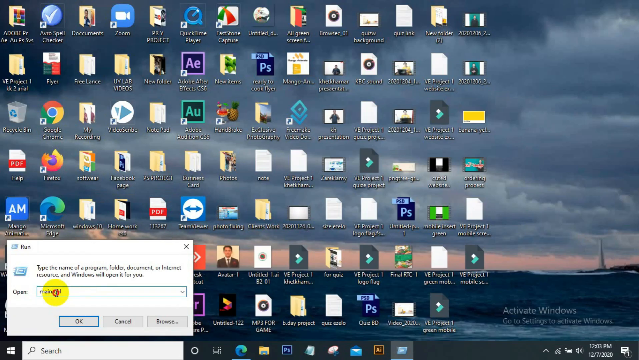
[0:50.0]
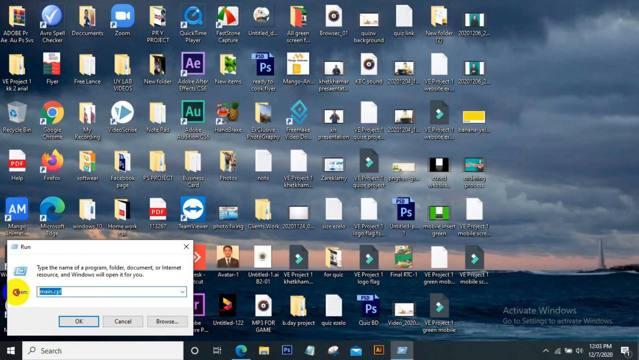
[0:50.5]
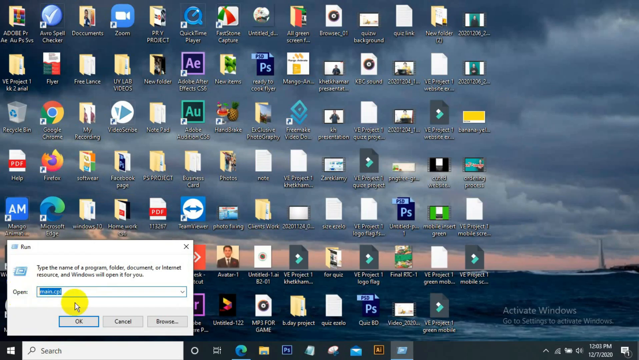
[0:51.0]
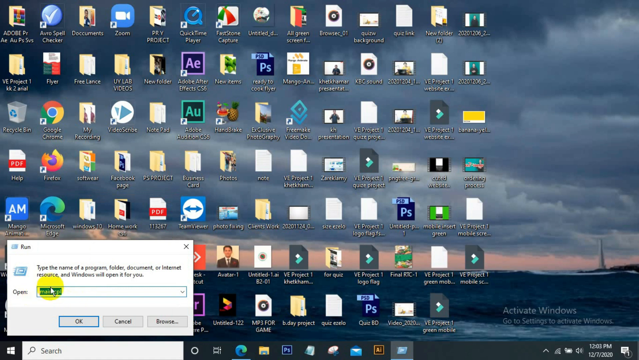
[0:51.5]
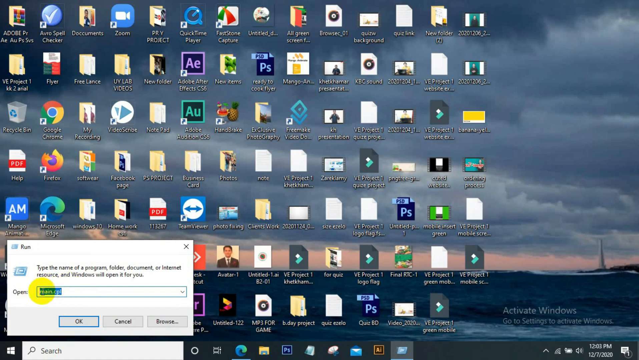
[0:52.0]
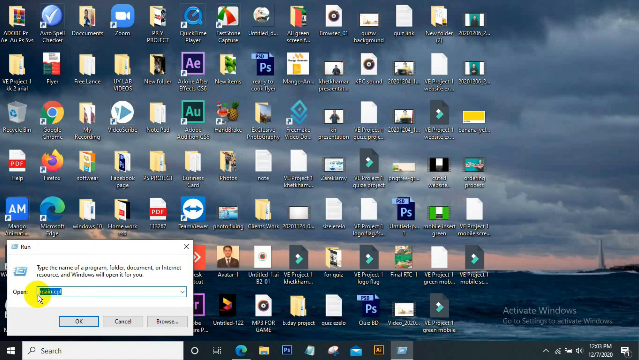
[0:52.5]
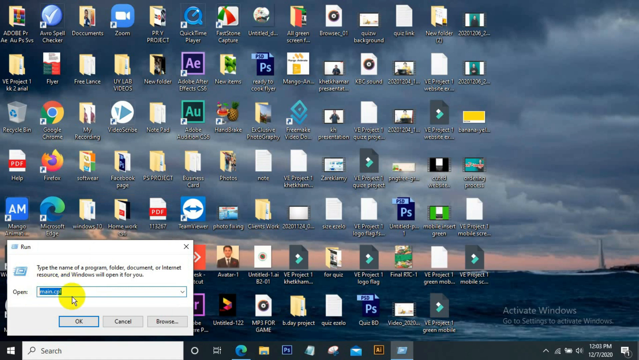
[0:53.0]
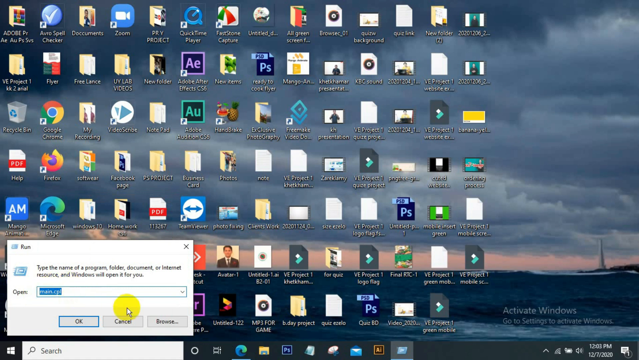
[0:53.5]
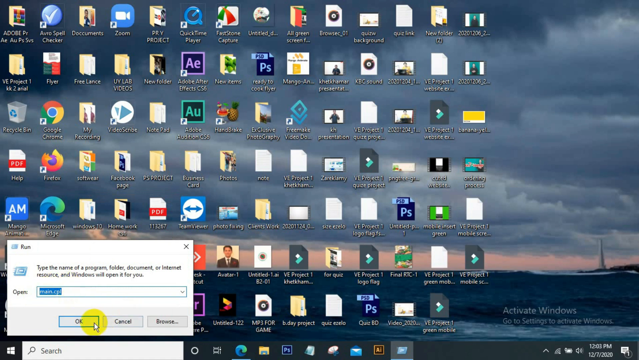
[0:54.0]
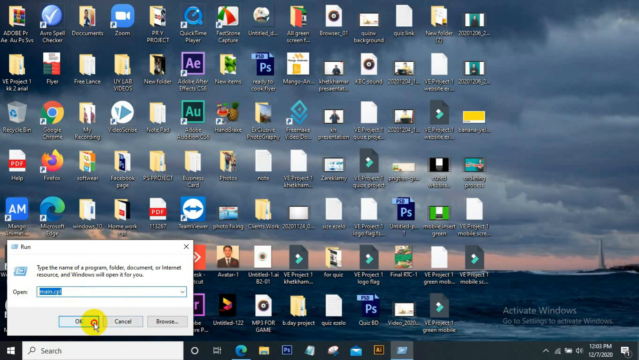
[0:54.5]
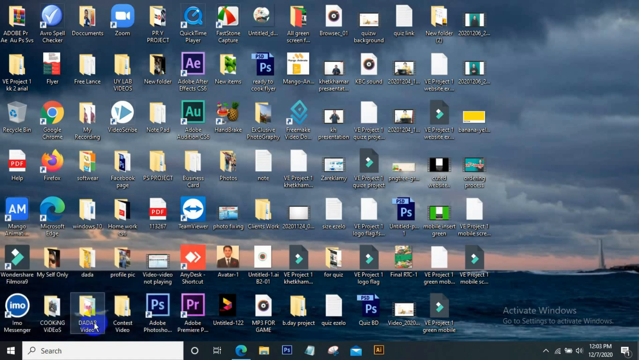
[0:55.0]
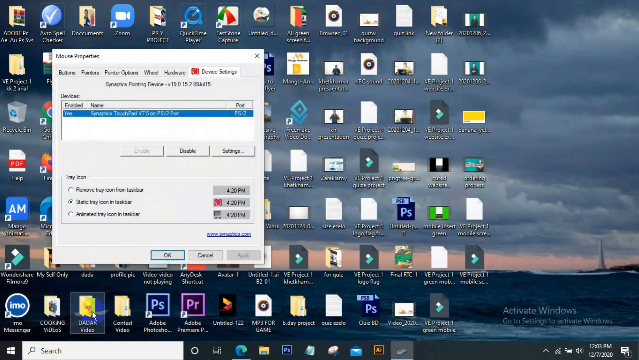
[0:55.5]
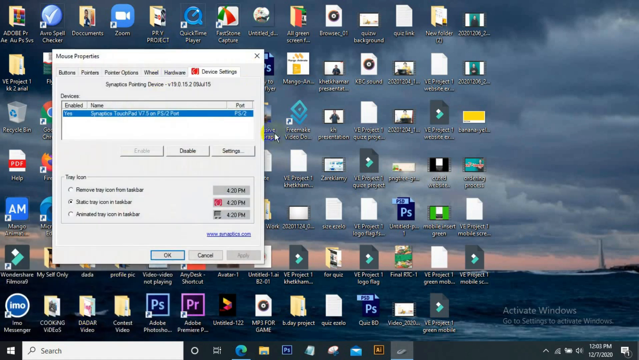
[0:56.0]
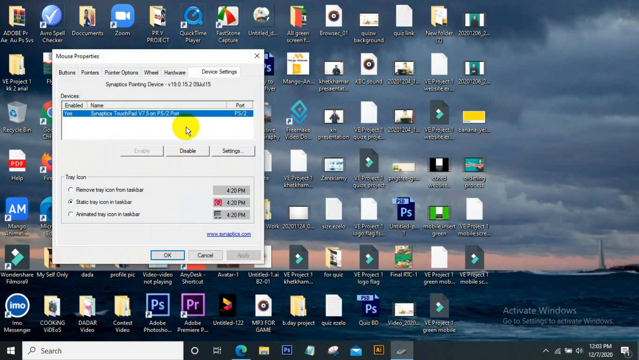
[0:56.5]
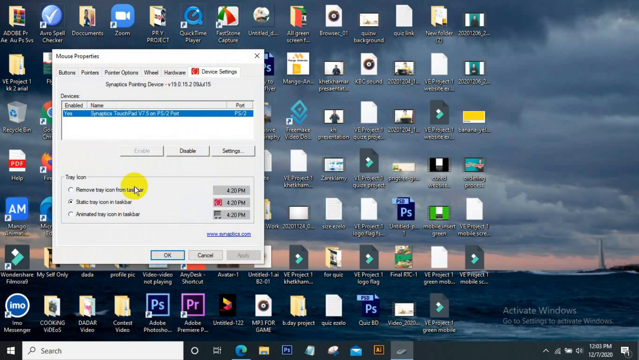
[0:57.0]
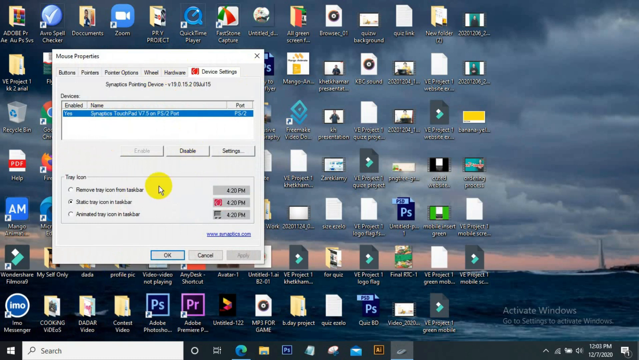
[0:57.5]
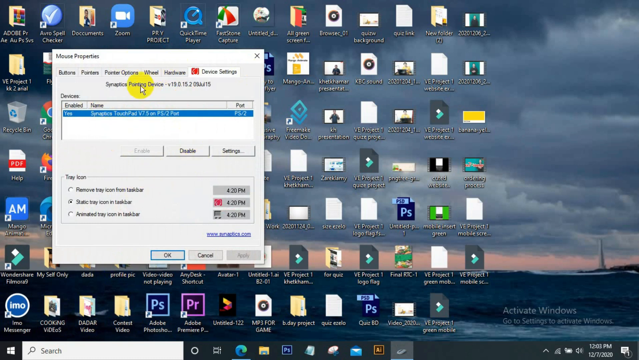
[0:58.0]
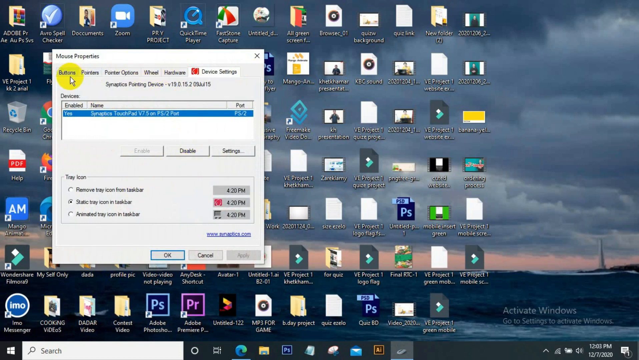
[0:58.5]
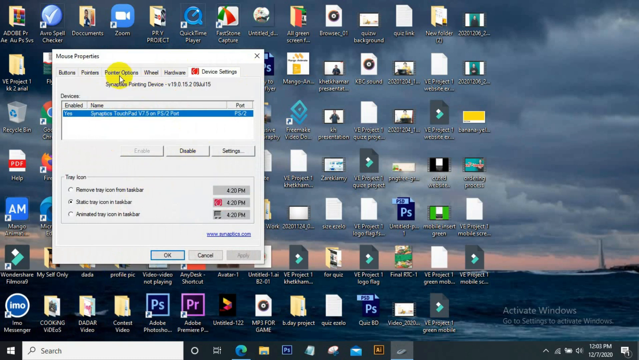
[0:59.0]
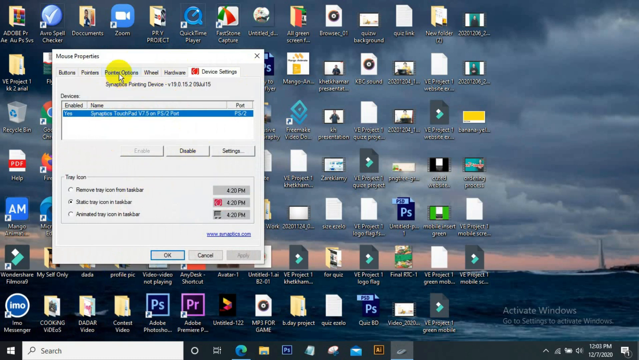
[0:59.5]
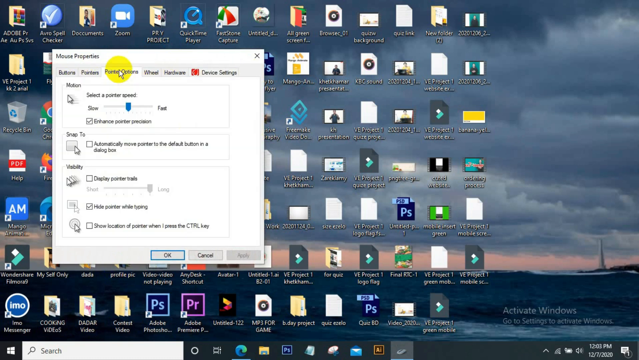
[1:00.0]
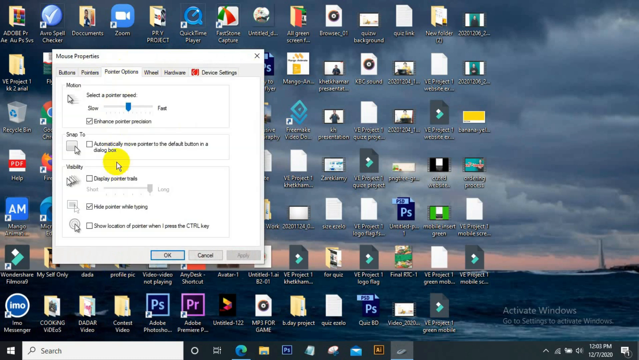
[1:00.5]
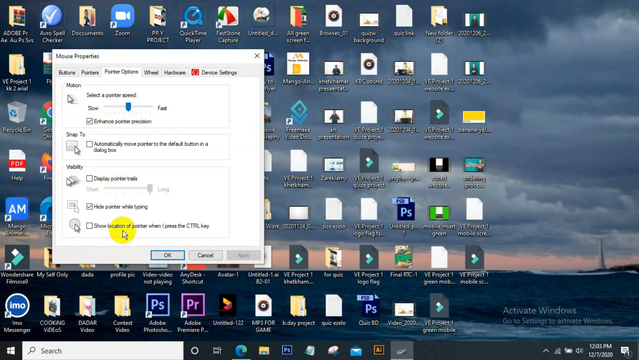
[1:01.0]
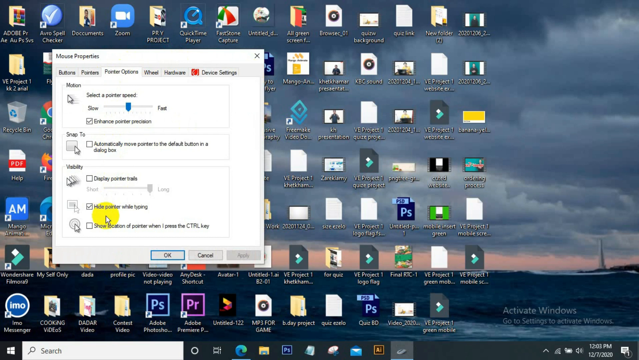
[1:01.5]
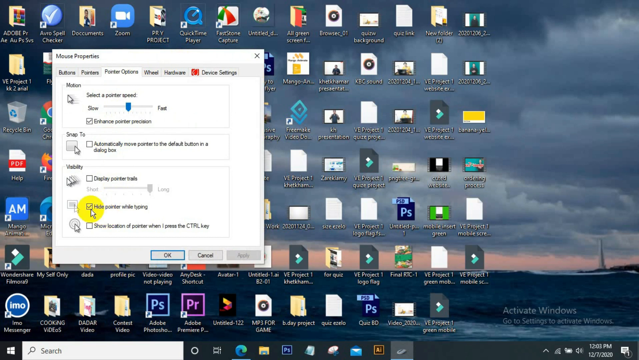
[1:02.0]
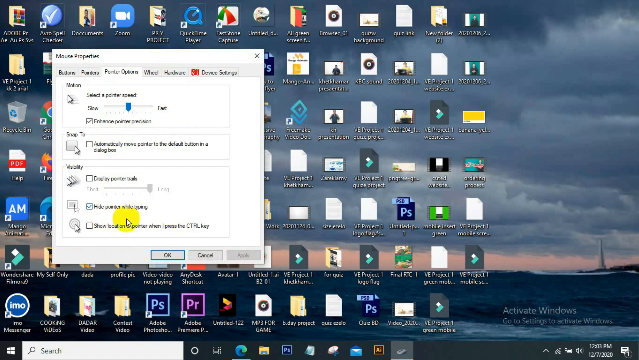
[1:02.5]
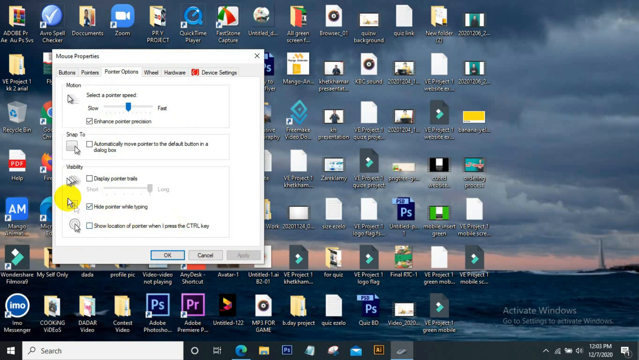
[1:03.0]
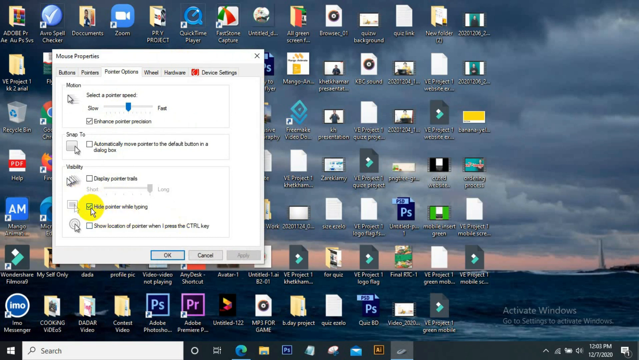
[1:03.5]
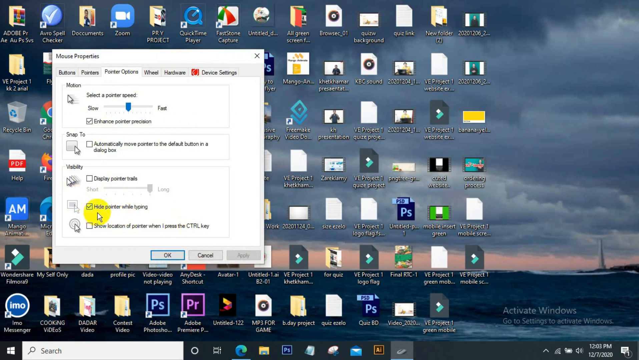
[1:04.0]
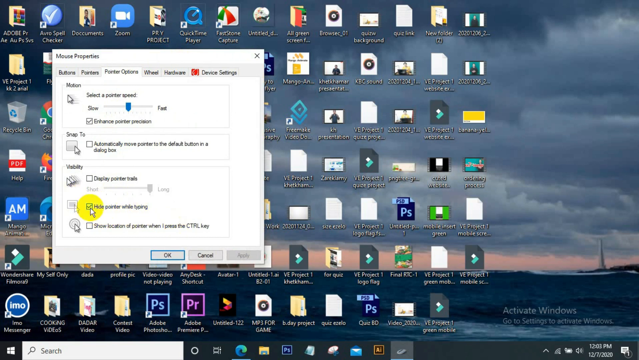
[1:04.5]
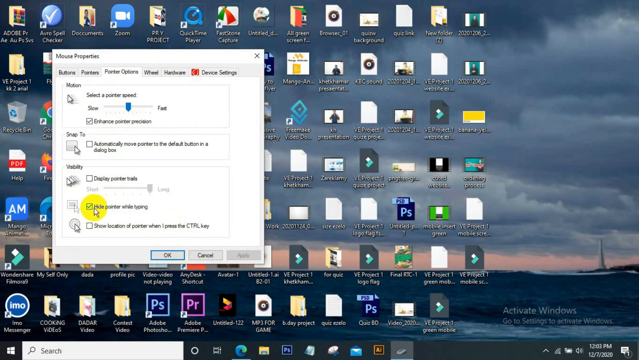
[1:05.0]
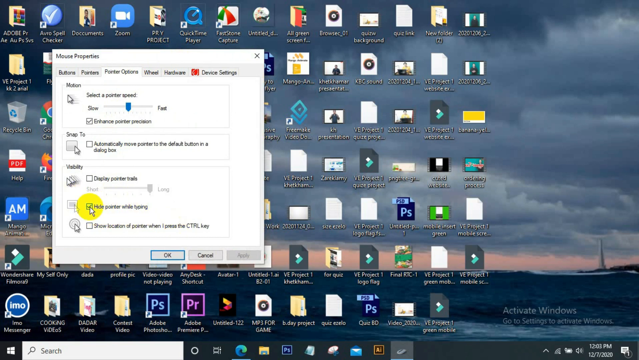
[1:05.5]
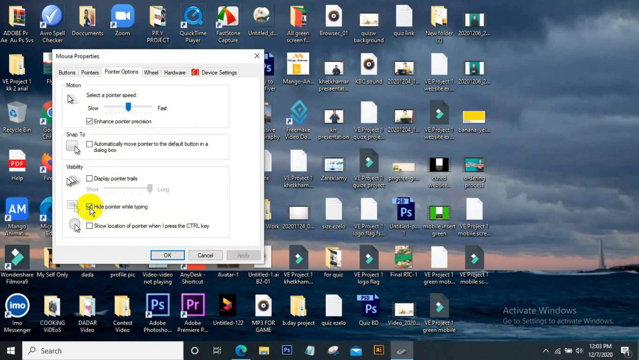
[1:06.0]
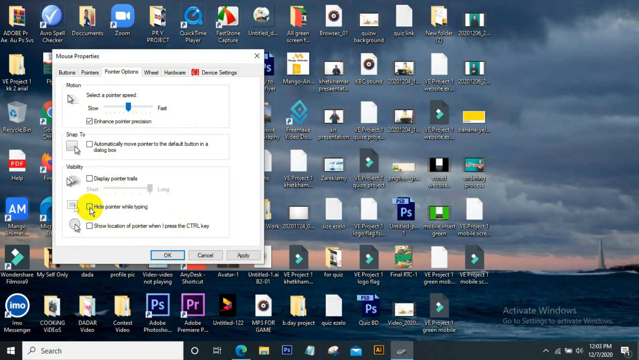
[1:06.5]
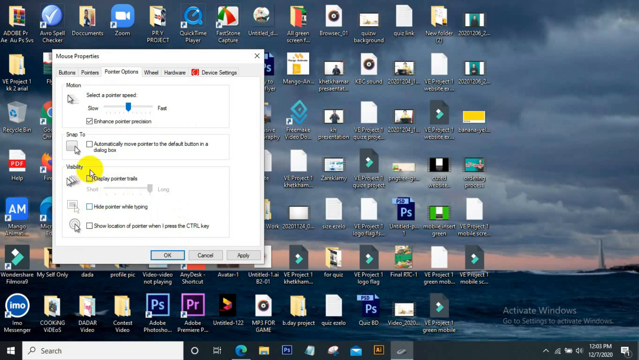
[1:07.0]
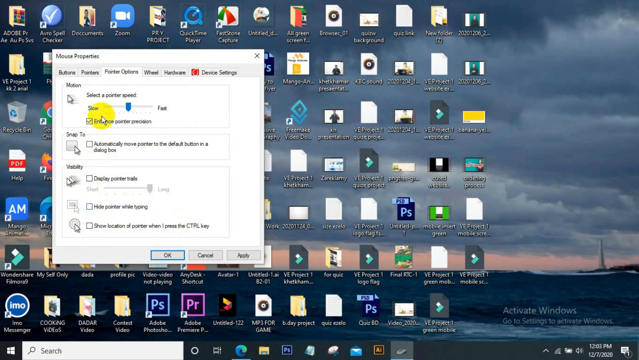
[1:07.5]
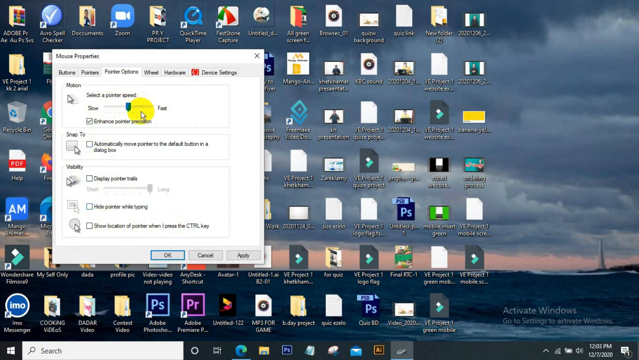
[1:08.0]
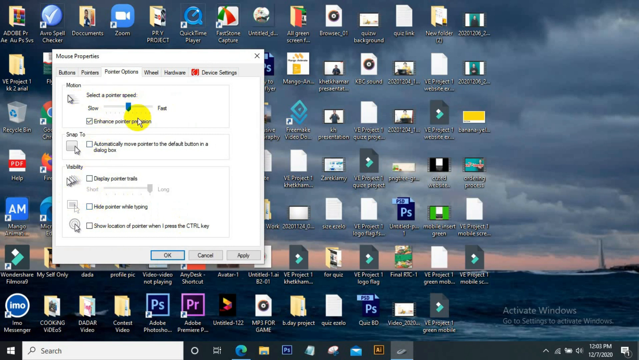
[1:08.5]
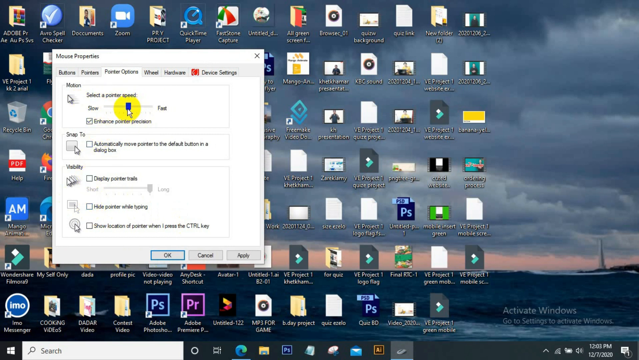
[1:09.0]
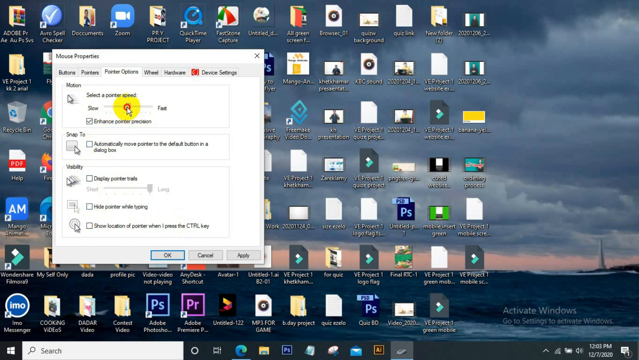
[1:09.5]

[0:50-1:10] In the Run dialog box in the bottom left of the desktop, the yellow-circled cursor moves from left to right over the text field, then clicks OK. A new, larger gray window titled "Mouse Properties" opens. An option is highlighted in blue, and the user makes circular motions with the cursor around it. The cursor moves to the top of the dialog box, moves from left to right, and clicks the third tab, which expands a series of mouse options. The cursor moves up and down to draw attention to its location, then moves left to right over an option reading "Hide Pointer While Typing," which has a check mark next to it. The user unchecks the box, moves the cursor to the top option in the Mouse Properties window, moves it left and right several times, and slides the option to the left.